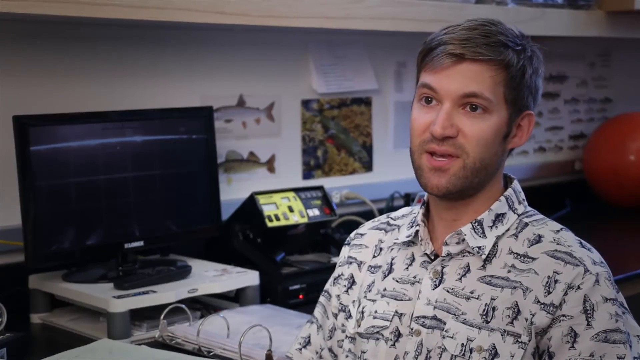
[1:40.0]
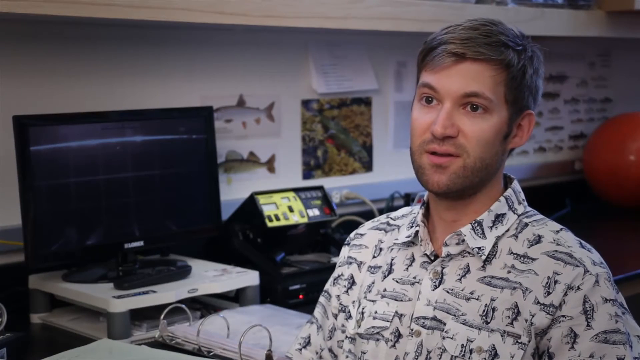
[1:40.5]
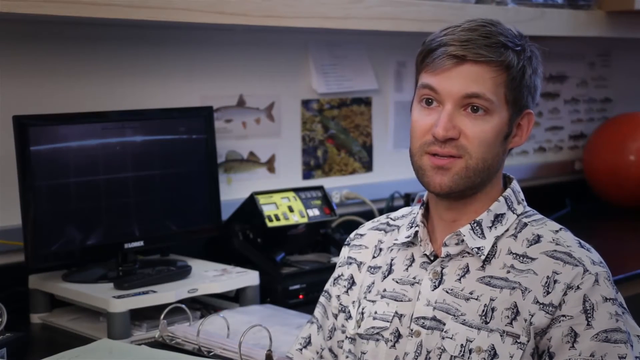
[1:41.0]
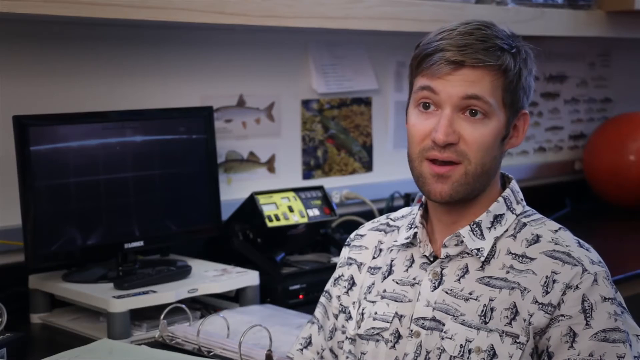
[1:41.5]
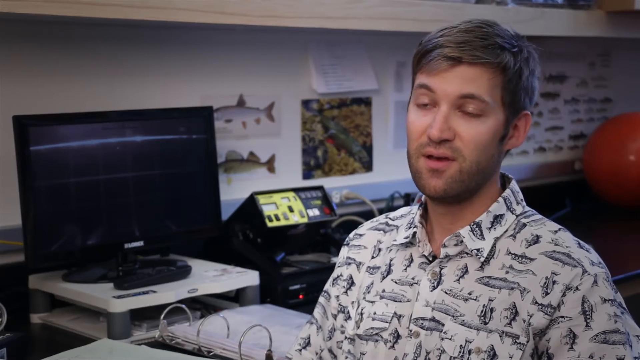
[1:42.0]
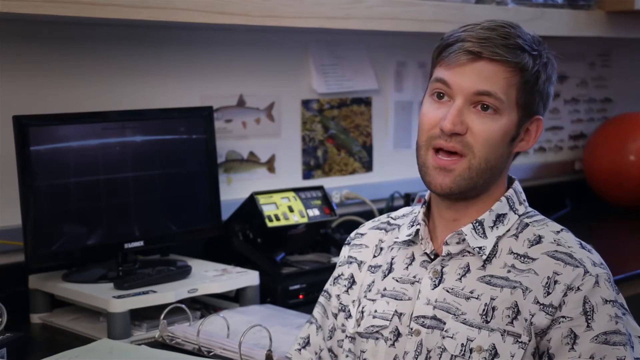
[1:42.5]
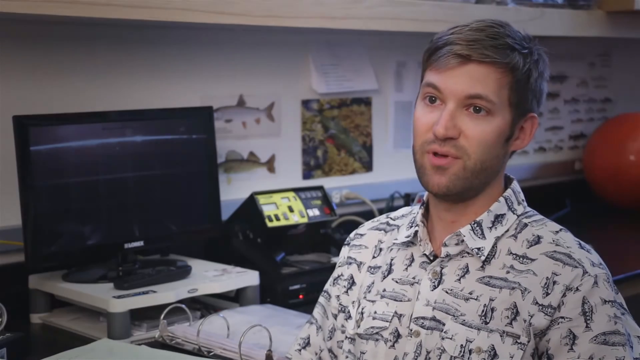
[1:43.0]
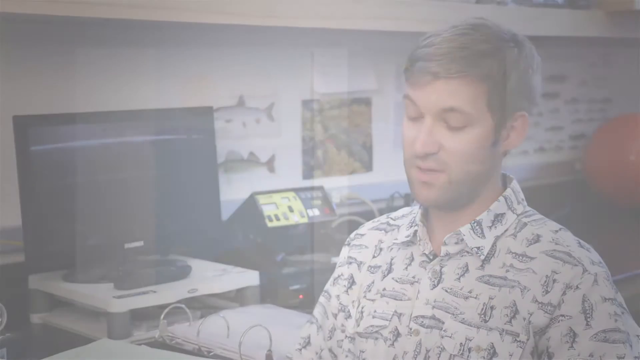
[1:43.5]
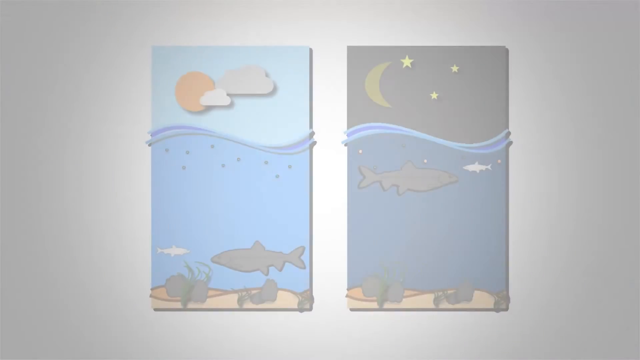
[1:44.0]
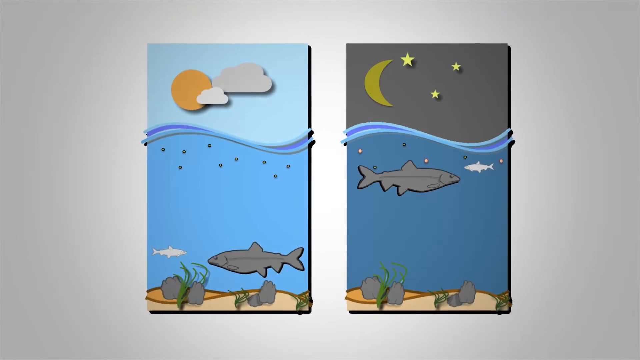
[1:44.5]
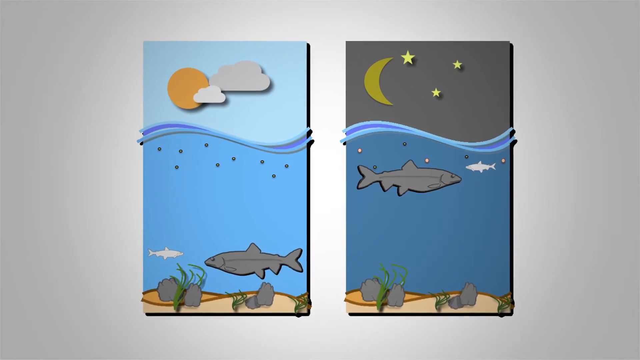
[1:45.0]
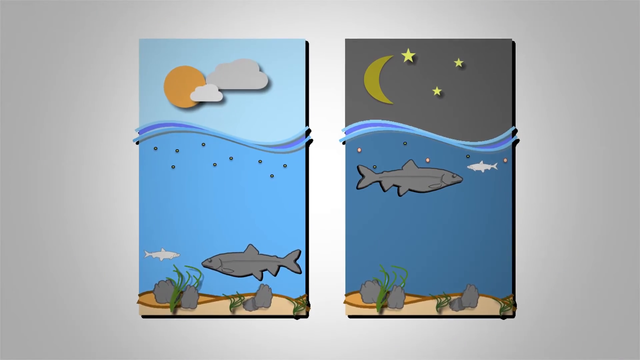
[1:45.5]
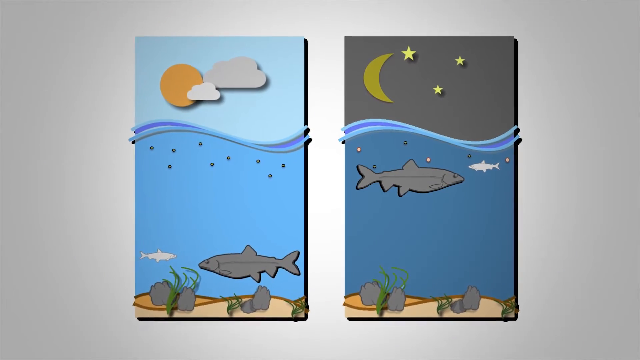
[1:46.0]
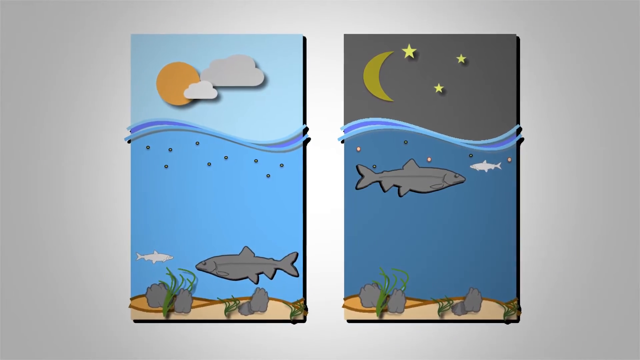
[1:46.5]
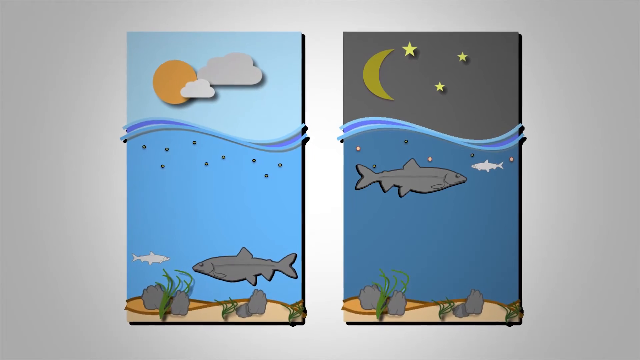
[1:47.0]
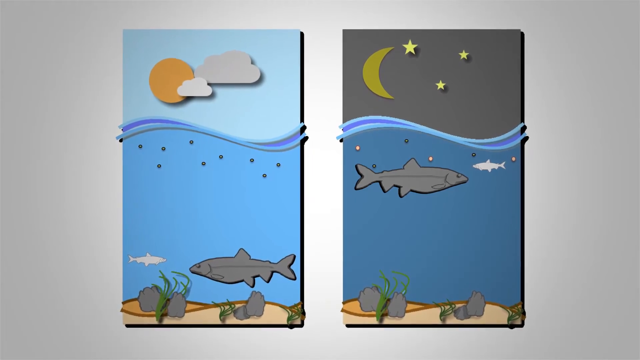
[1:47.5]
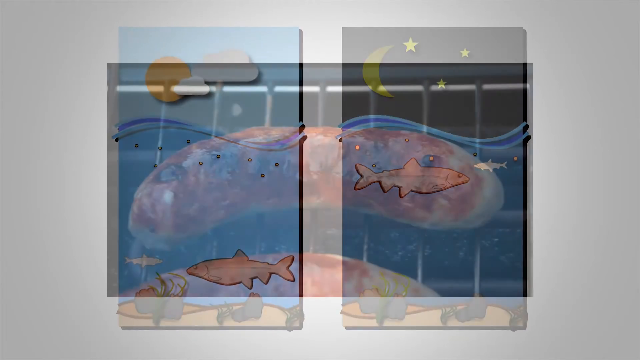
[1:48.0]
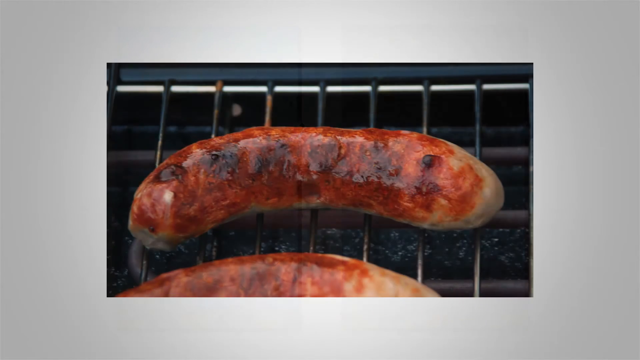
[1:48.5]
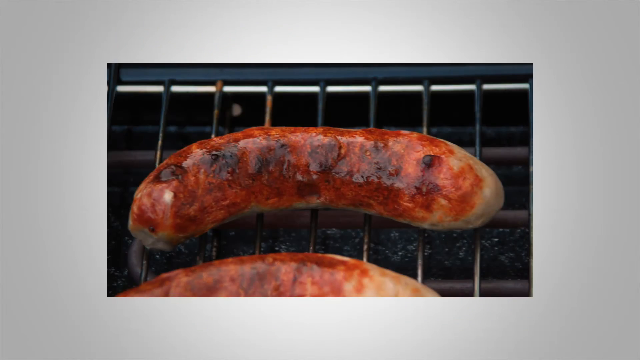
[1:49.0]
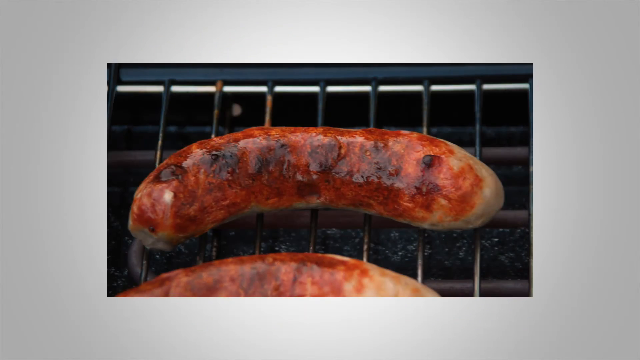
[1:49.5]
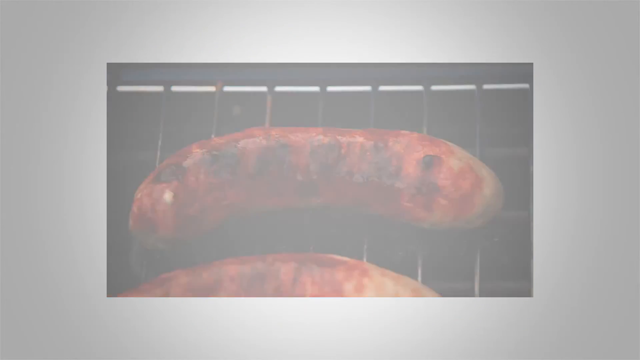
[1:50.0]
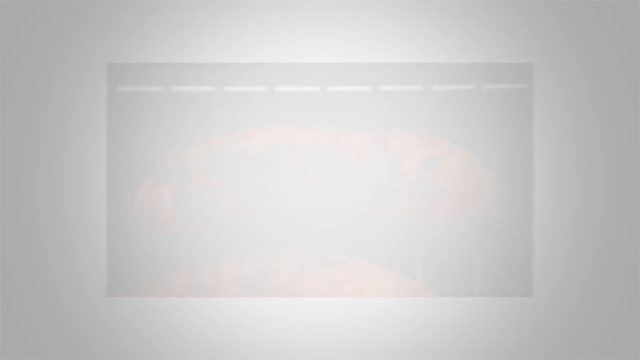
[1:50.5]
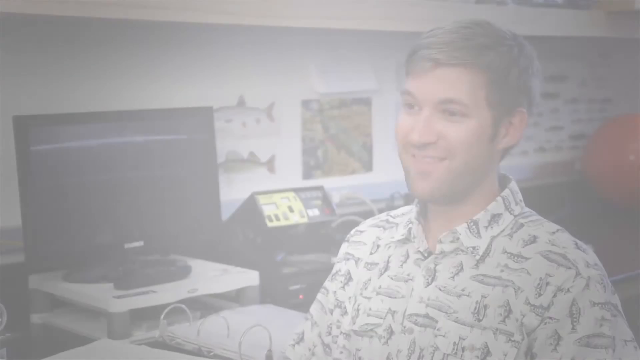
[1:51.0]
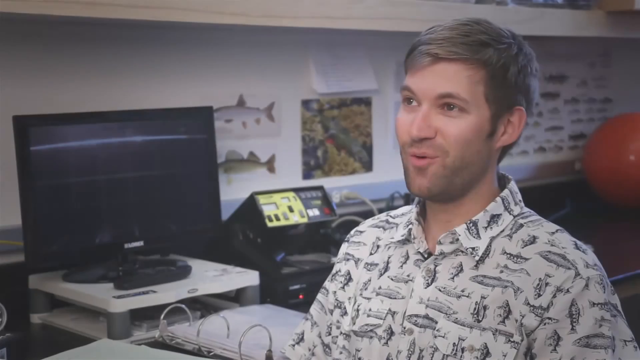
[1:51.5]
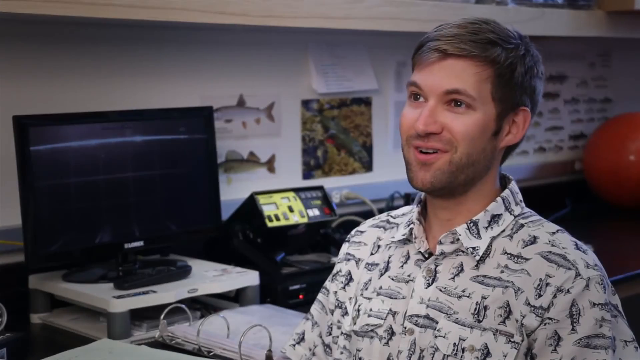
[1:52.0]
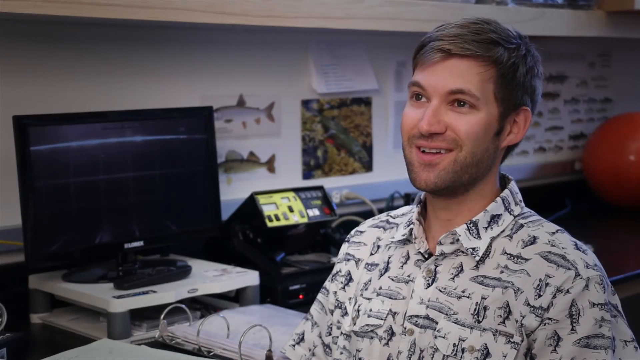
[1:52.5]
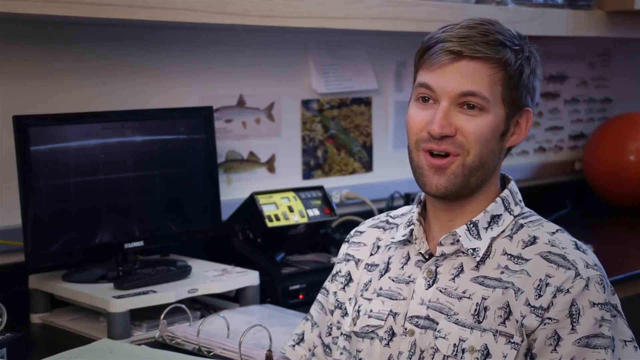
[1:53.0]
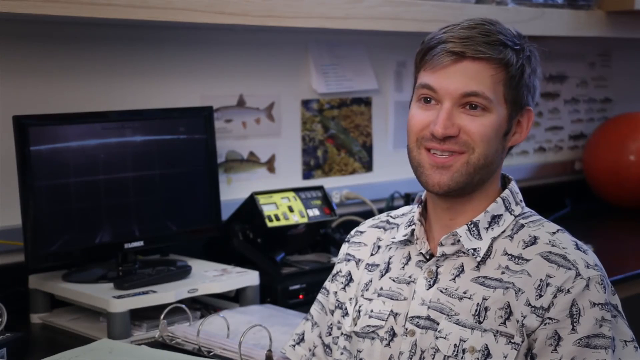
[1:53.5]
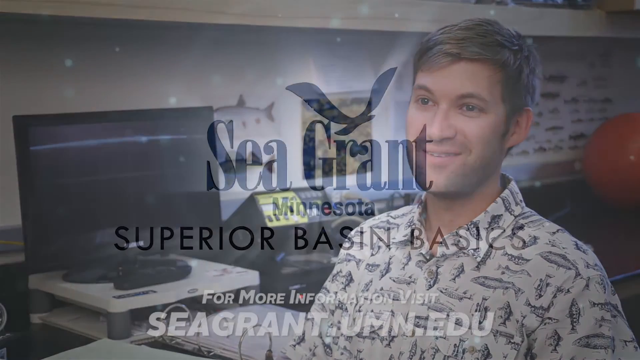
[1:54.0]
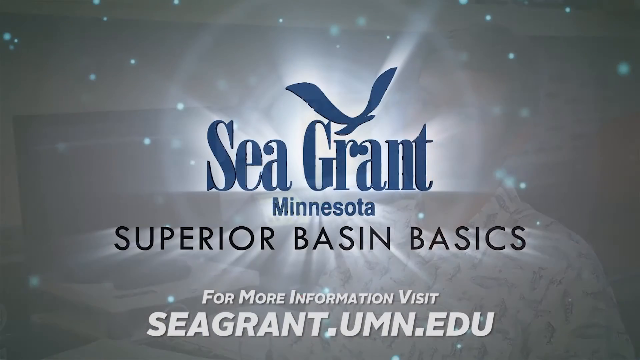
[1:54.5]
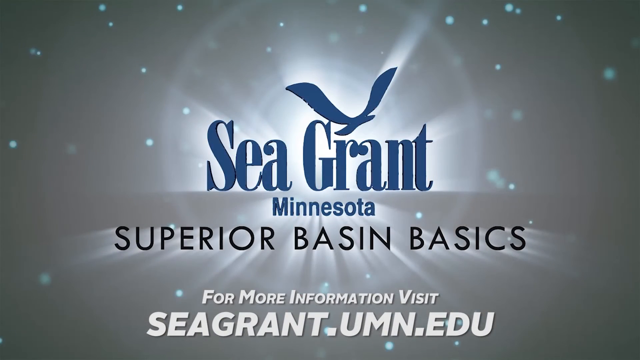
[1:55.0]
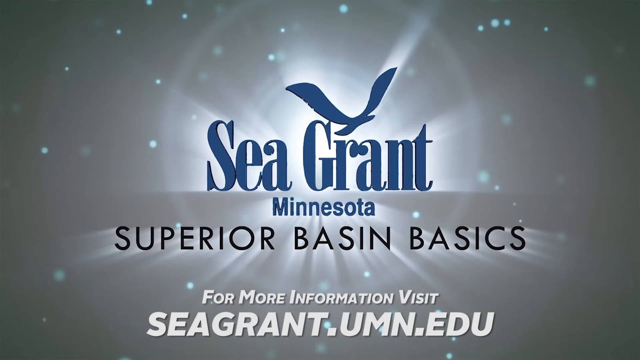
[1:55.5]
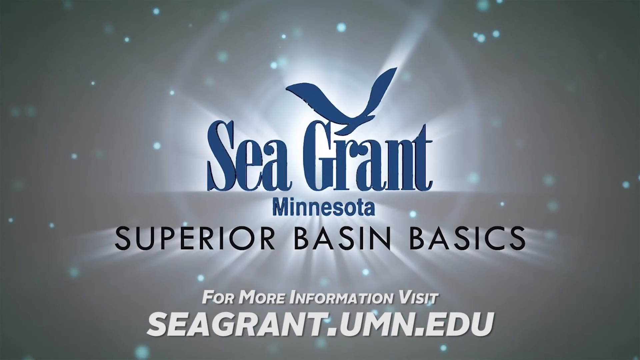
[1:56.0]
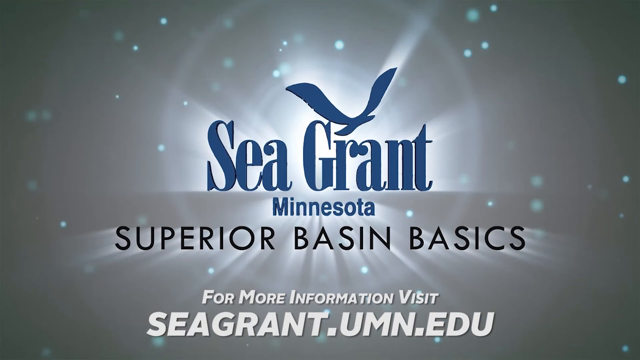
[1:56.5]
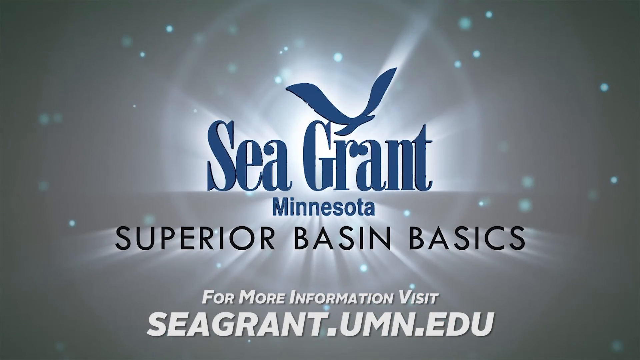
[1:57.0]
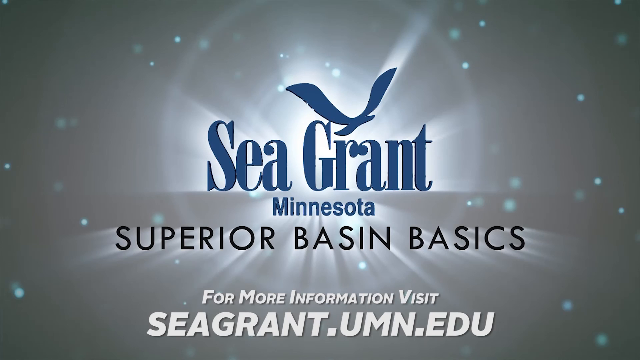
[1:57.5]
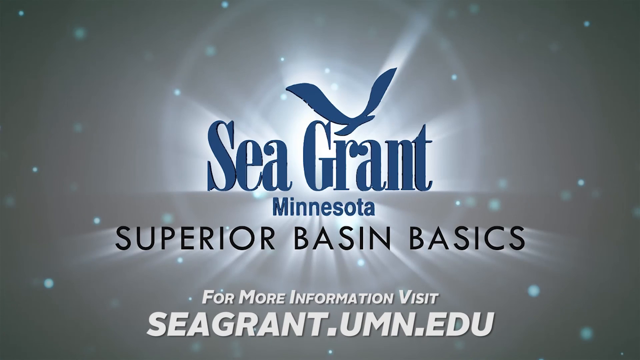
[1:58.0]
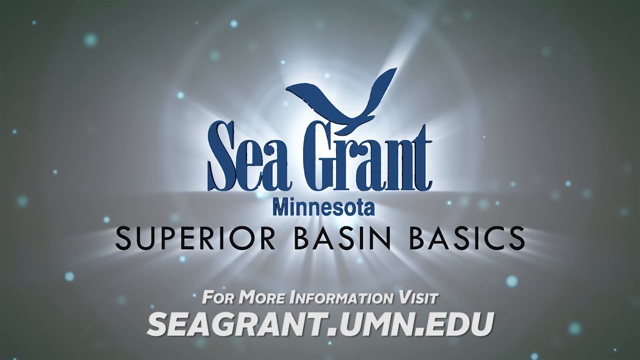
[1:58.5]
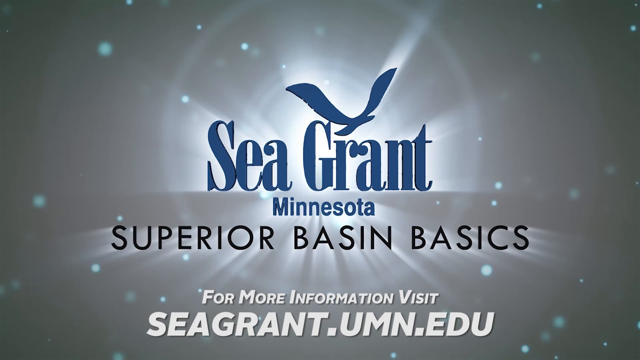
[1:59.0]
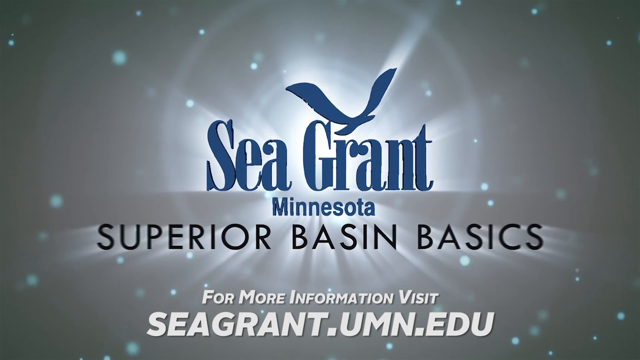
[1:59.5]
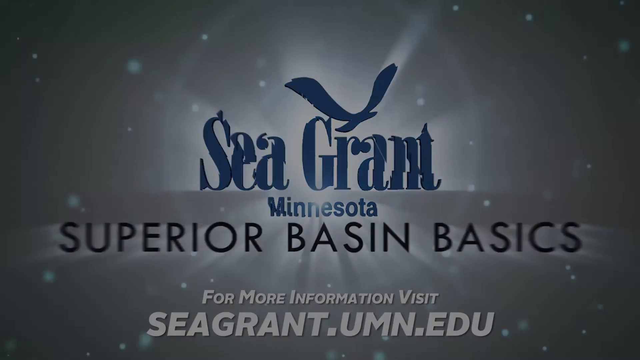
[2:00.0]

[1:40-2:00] A cartoon-style graph in a very childlike style shows a daytime slice of the ocean on the first half: blue water, a light blue sky, a yellow circle sun, rocks and green plant material at the bottom, and two fish toward the bottom, a big gray one and a small white one. On the right side of the screen is a nighttime slice of the ocean with stars and a moon in the sky, where the same two fish, the large gray one and the smaller white one, float toward the top of the water. The video then cuts to what looks like a sausage on a grill, slightly curved, with grill marks and some steam coming out the sides.